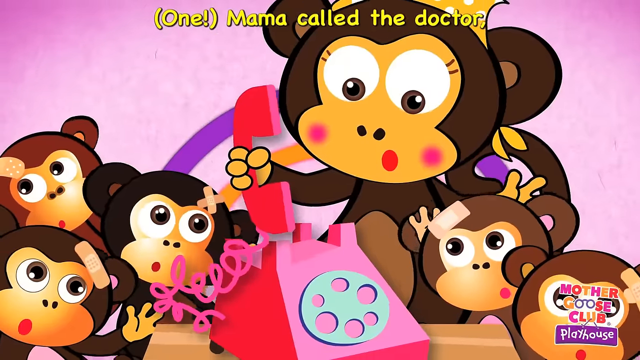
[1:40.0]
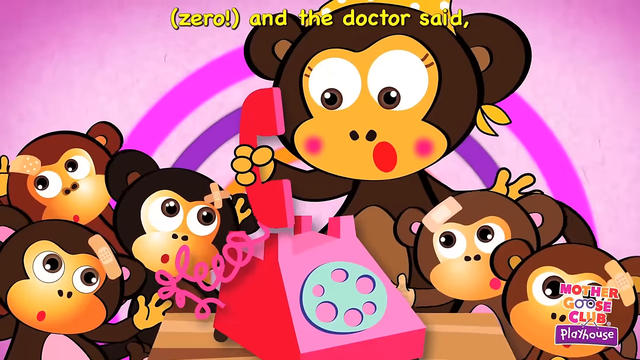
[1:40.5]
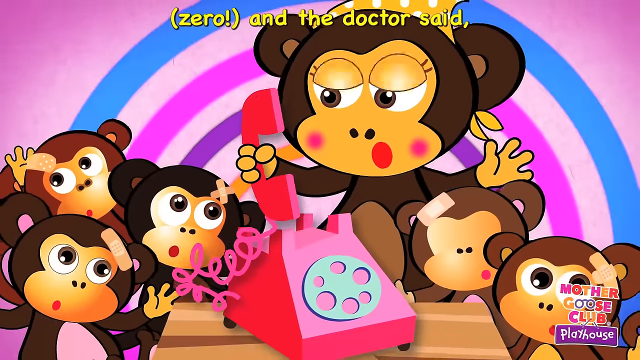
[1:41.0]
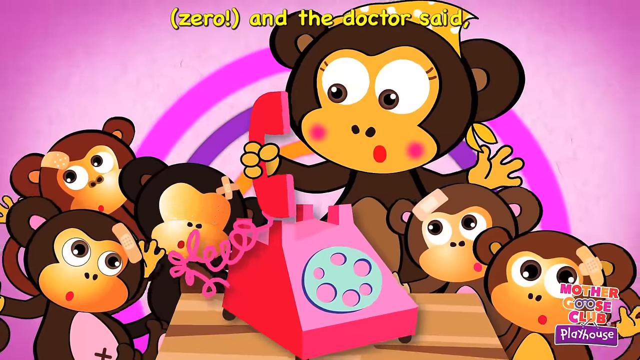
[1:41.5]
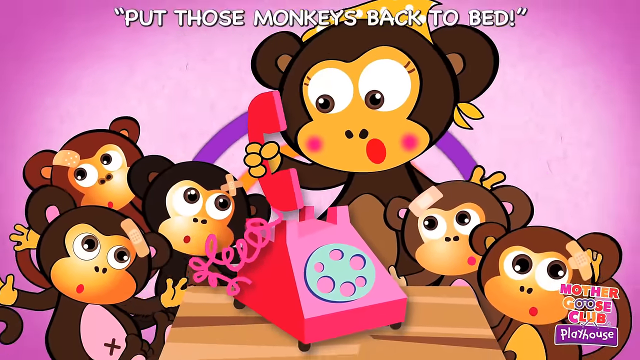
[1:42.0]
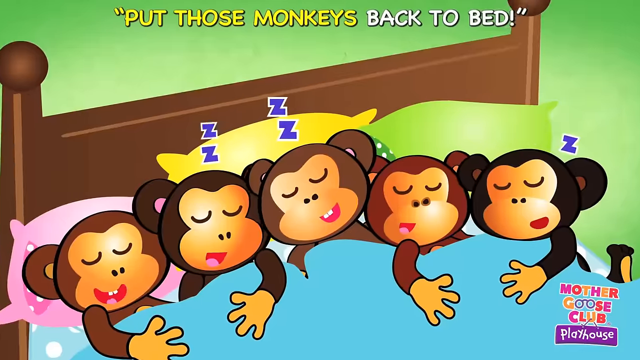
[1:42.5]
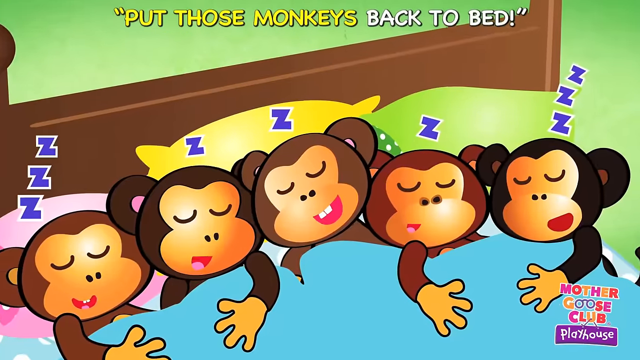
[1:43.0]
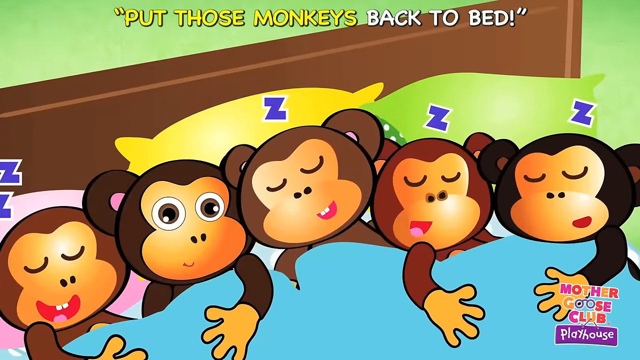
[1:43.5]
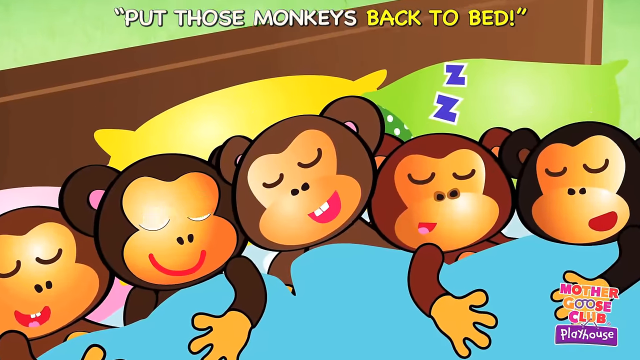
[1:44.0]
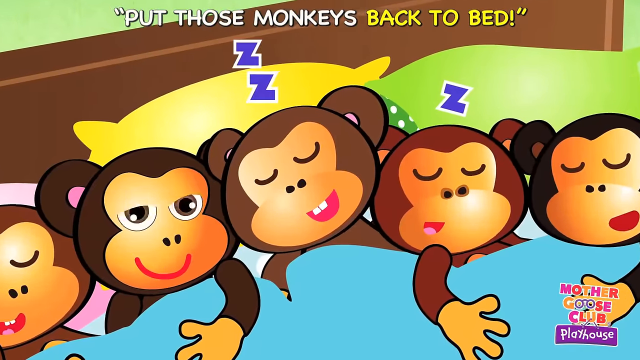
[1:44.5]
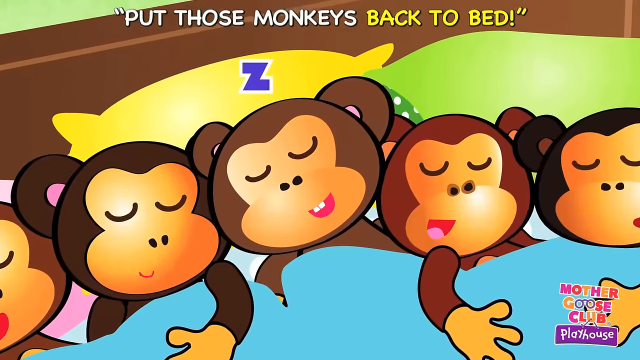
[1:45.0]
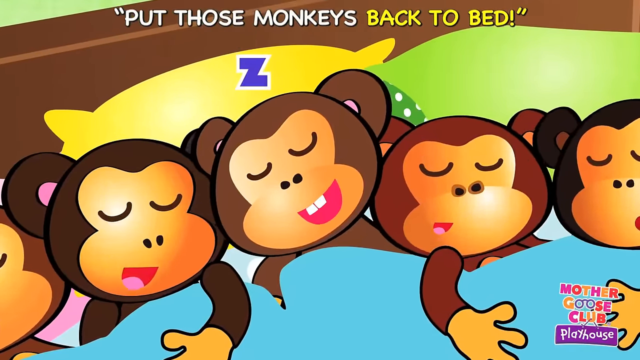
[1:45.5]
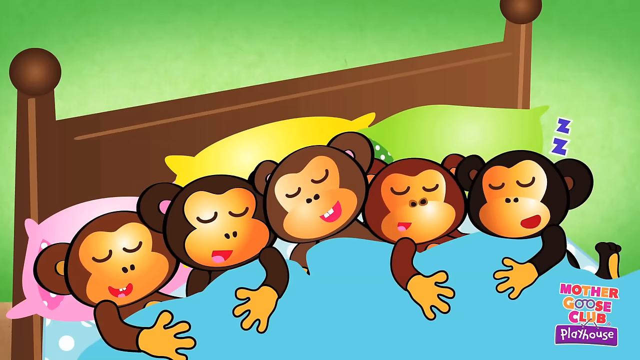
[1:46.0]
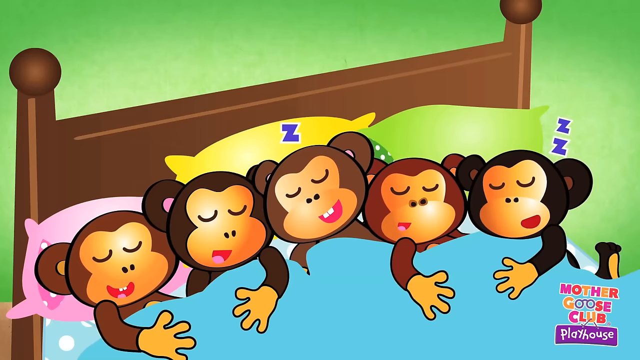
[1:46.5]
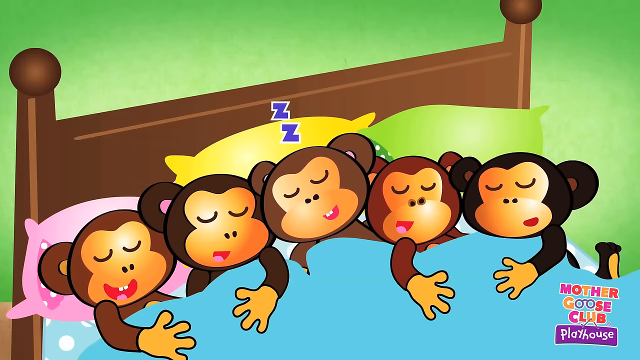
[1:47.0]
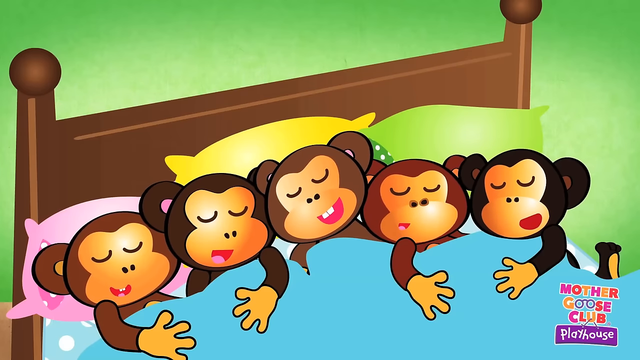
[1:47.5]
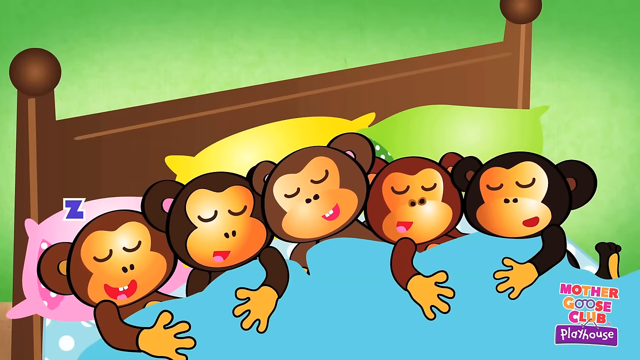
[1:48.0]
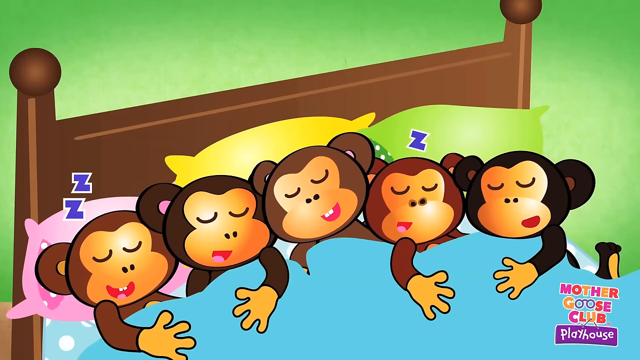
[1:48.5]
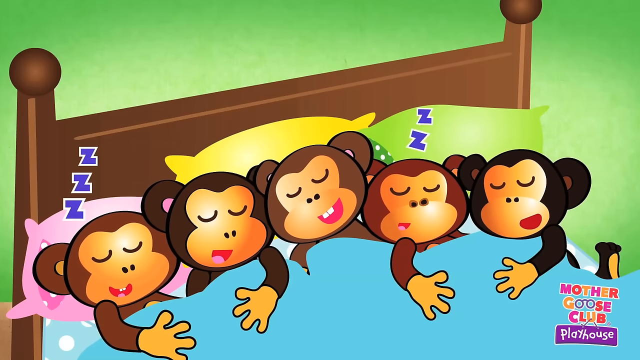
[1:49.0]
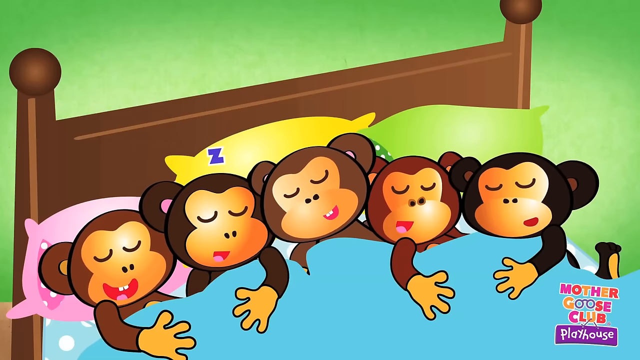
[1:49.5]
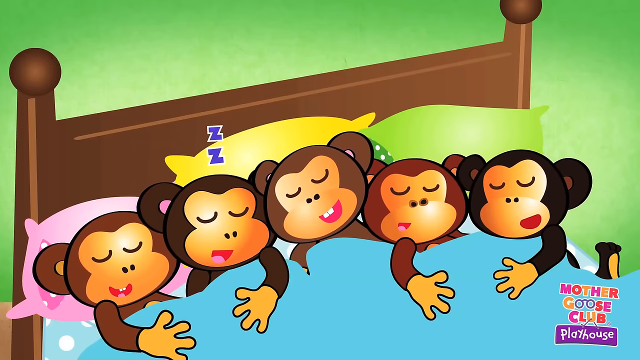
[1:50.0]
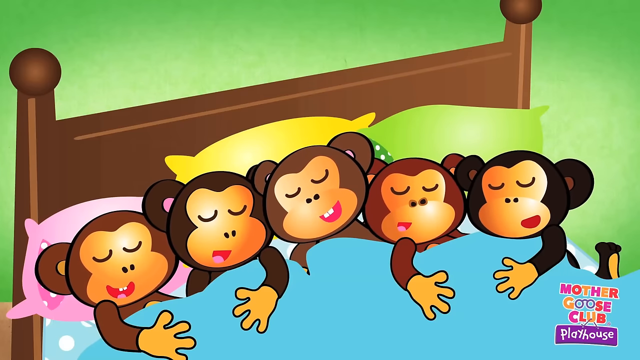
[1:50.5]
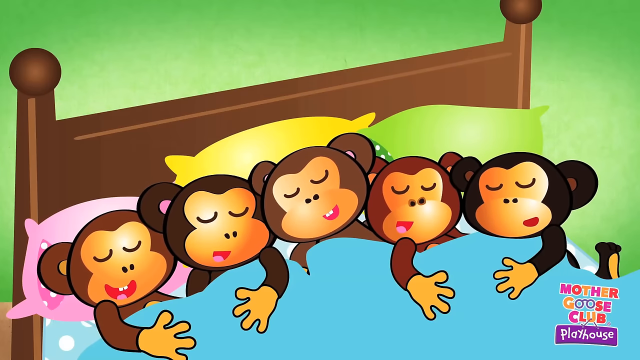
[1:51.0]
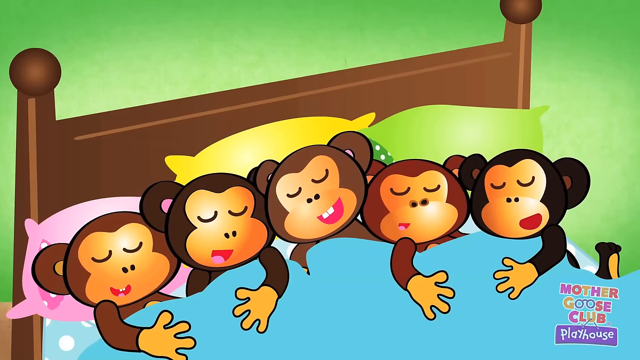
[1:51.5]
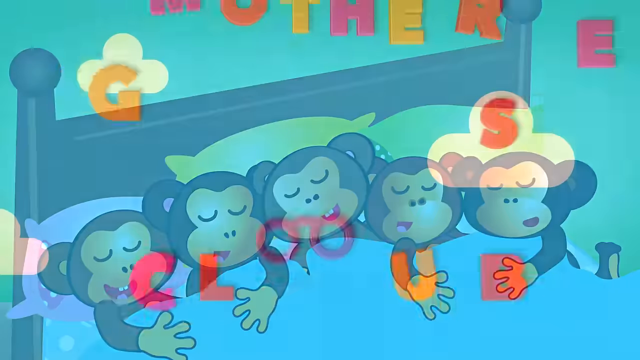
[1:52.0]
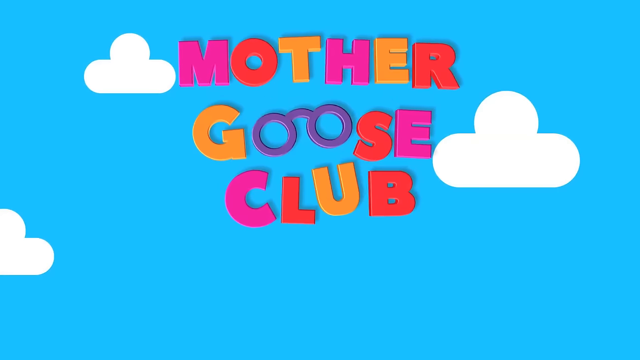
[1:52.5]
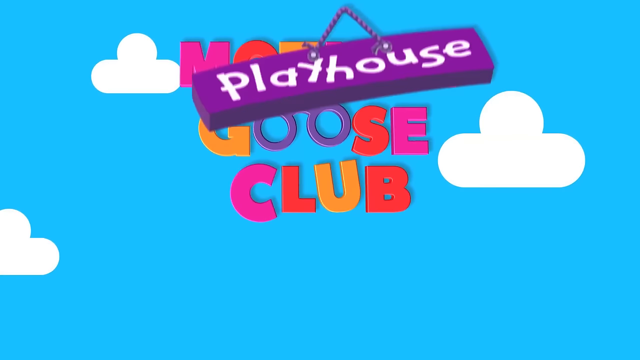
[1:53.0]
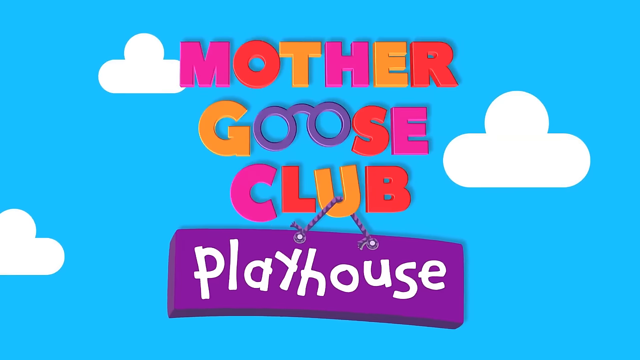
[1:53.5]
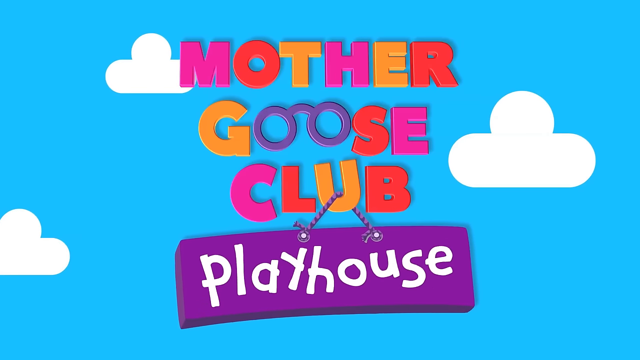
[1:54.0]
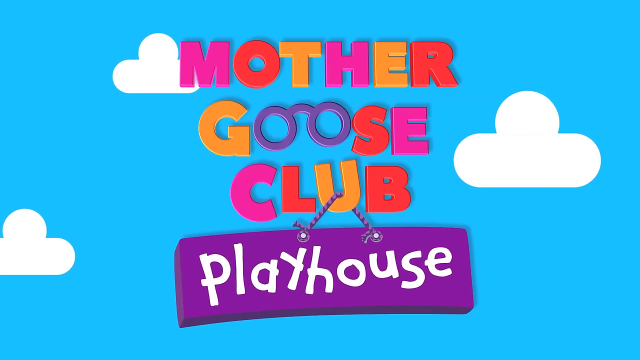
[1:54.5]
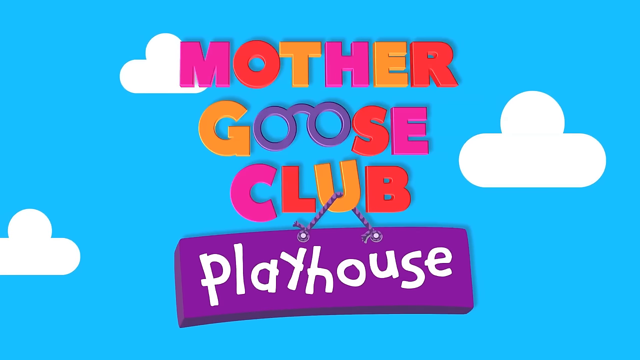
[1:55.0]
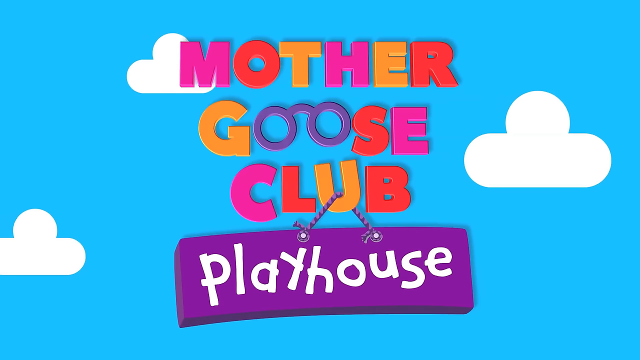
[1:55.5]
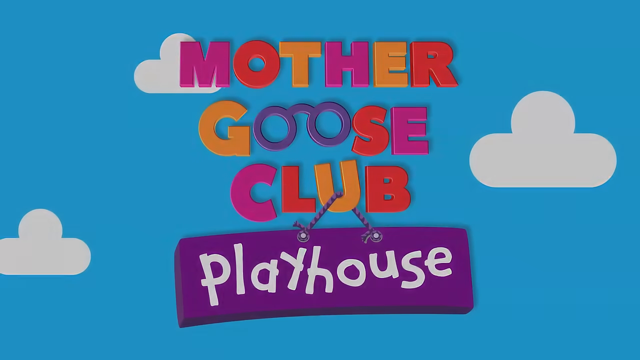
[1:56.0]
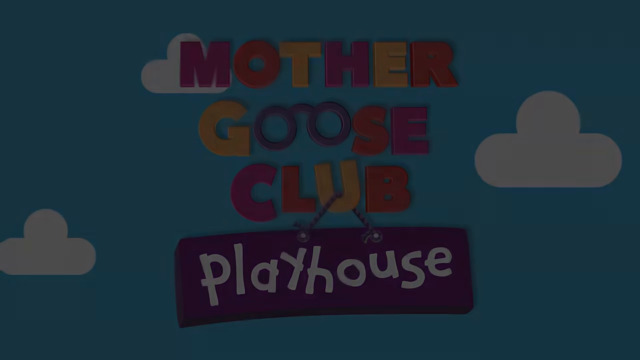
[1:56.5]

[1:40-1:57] The mom talks to the doctor on the phone, and then the view slides to all the monkeys lying on the bed, sleeping and snoring, with little Z's coming out of their heads. From left to right there are a pink, a yellow and a green pillow; the pink one shows a little bit of polka dots and the green one has green and white polka dots. A brown monkey with pink ears is in the middle, along with a brown monkey with kind of orange ears and a black monkey with a little bit of brown. All the monkeys have band-aids on their heads, two of them show some teeth, the first on the left and the middle one, and the ones on either side of the middle one have an arm hanging out. There is a blue polka dot bed sheet, and a blue blanket covers them all. The concentric circles behind the mom go from purple to pink to blue; the phone is the same color and she wears the same colored bandana. The doctor says "put those monkeys back to bed." Multi-colored text reading "Mother Goose Club Playhouse" appears on a white background with blue clouds floating by. The walls in the background are green, with no pictures on them.